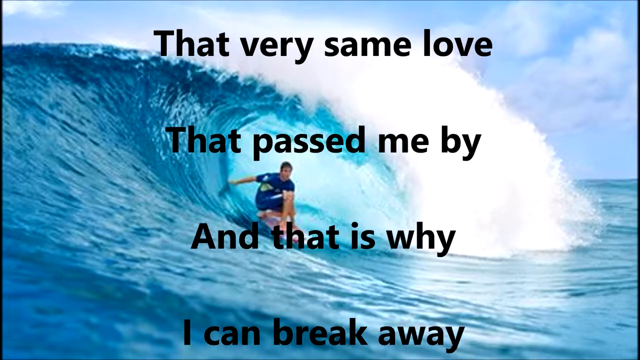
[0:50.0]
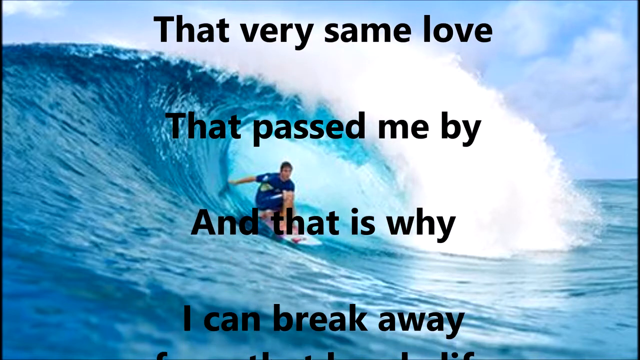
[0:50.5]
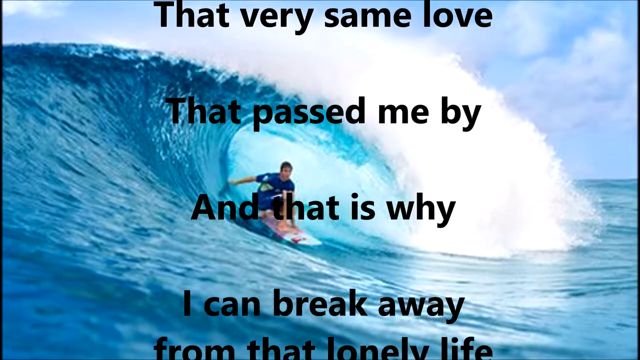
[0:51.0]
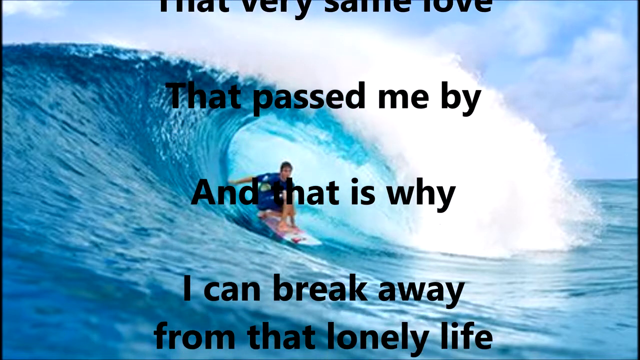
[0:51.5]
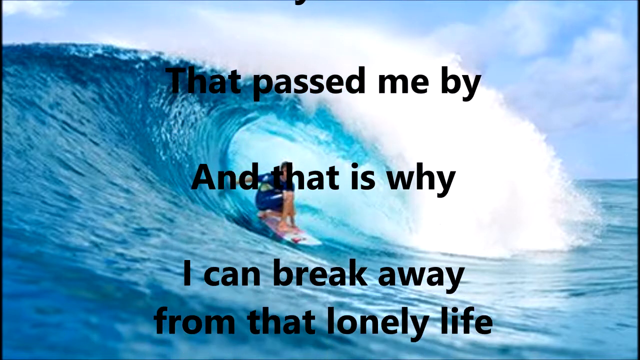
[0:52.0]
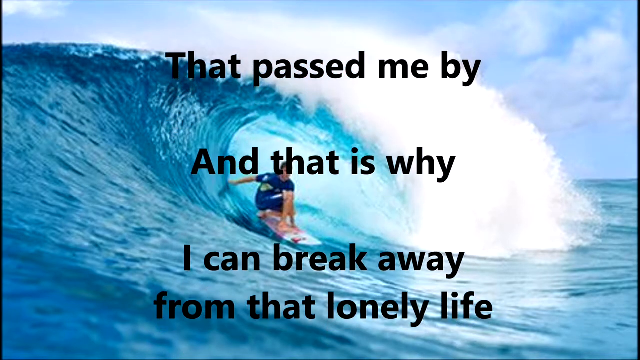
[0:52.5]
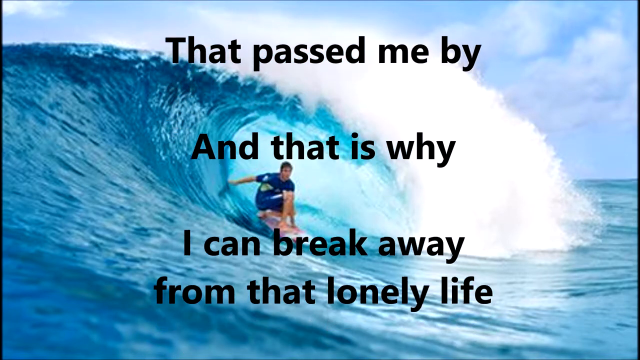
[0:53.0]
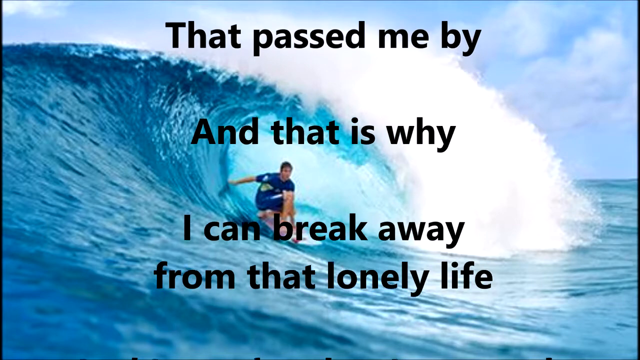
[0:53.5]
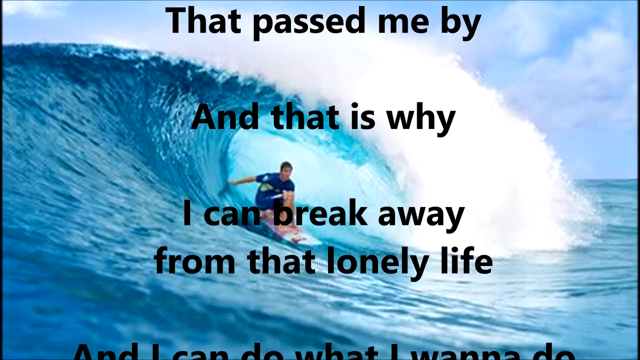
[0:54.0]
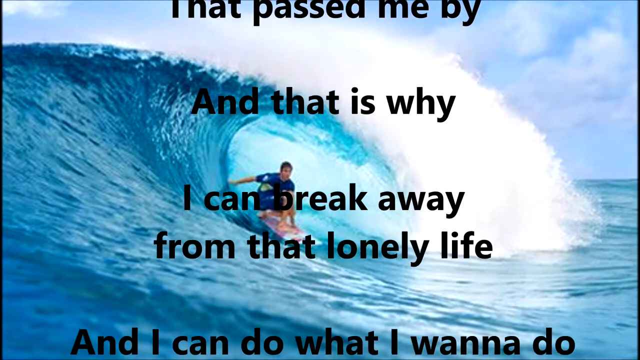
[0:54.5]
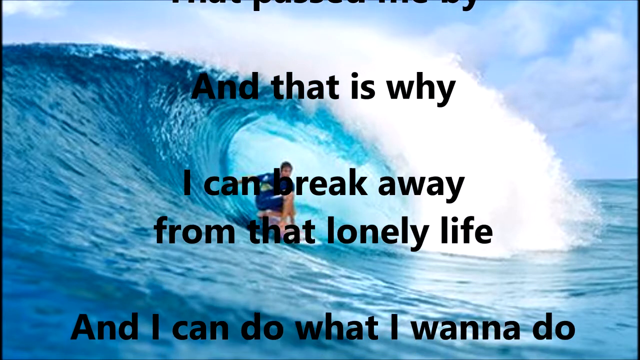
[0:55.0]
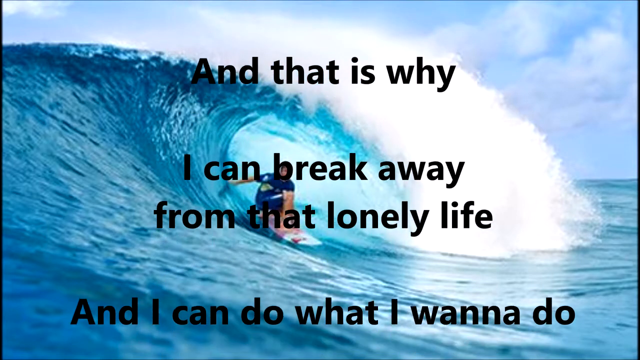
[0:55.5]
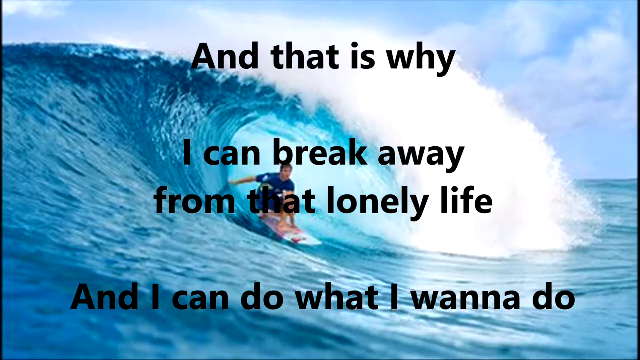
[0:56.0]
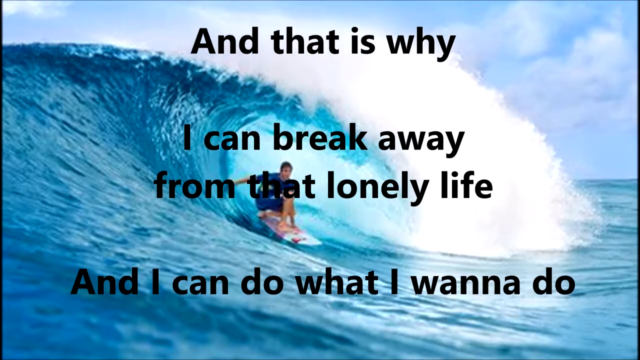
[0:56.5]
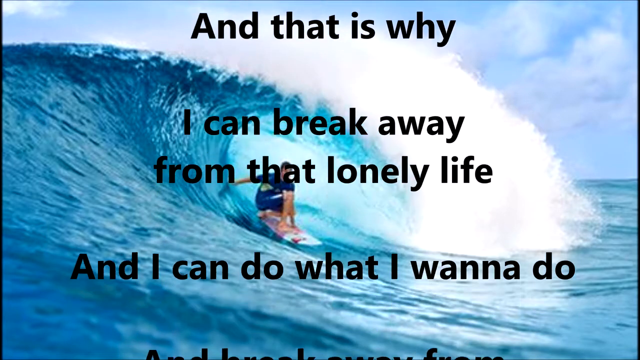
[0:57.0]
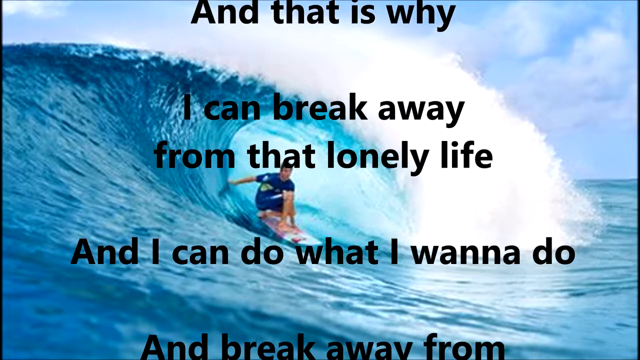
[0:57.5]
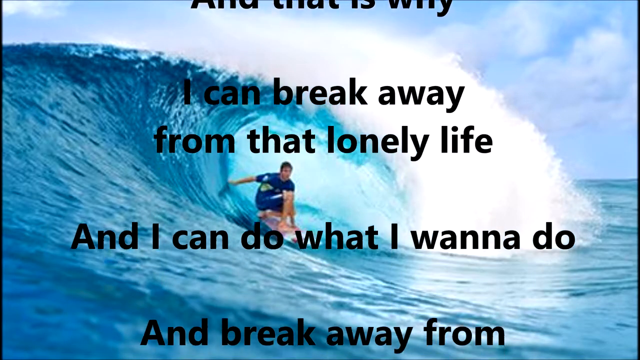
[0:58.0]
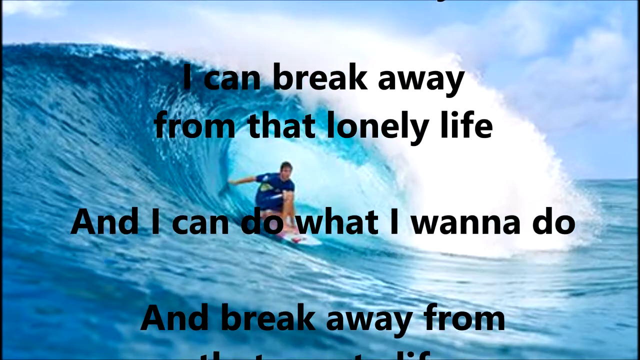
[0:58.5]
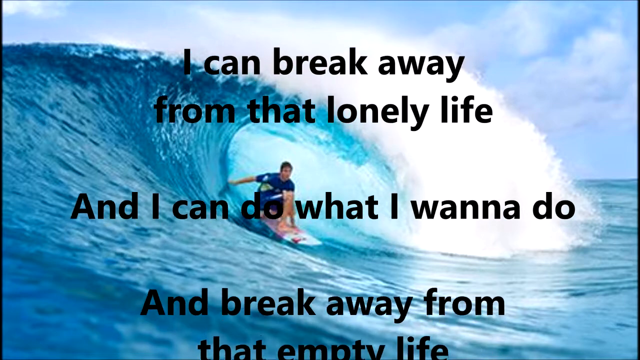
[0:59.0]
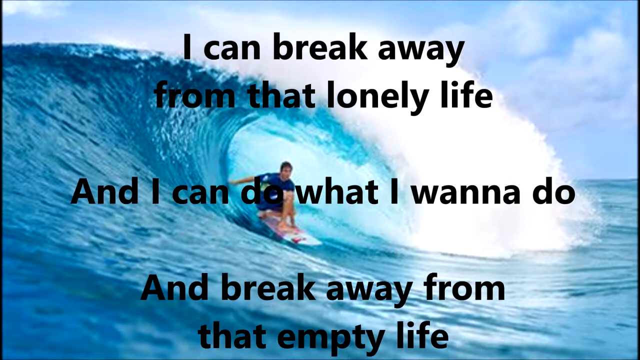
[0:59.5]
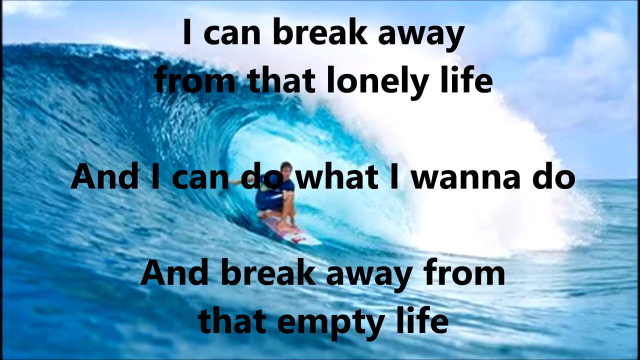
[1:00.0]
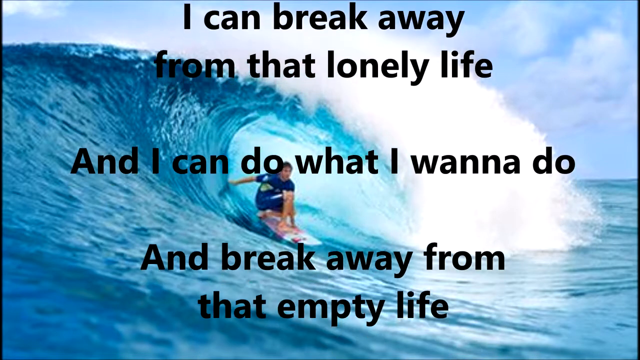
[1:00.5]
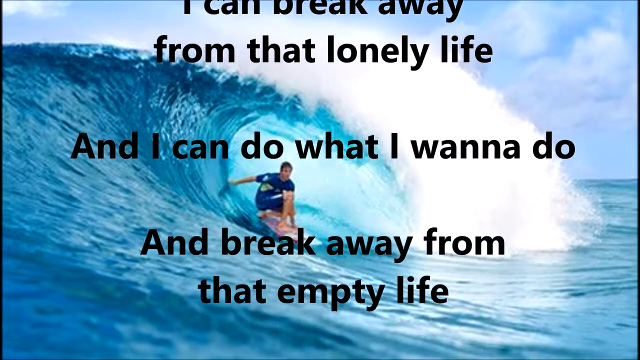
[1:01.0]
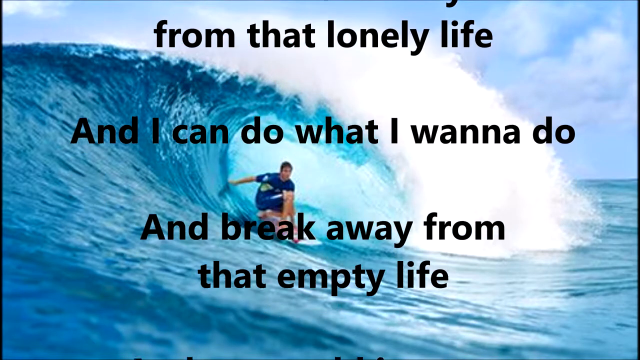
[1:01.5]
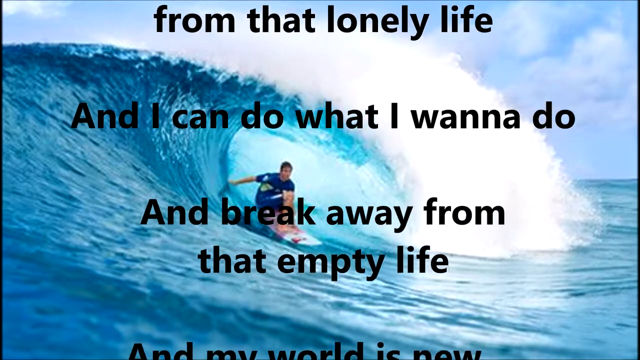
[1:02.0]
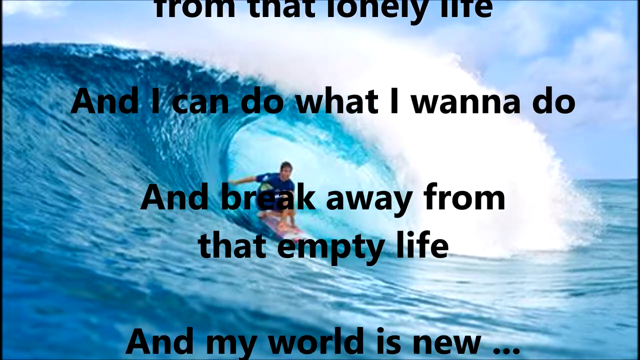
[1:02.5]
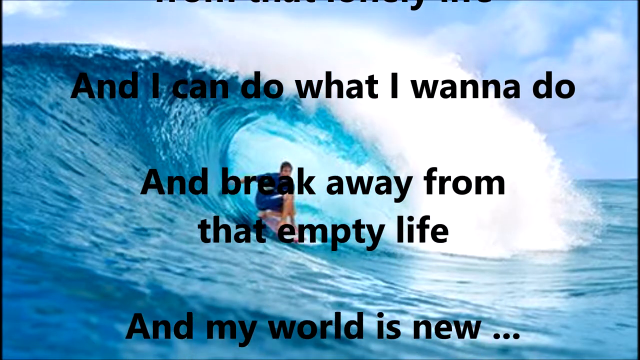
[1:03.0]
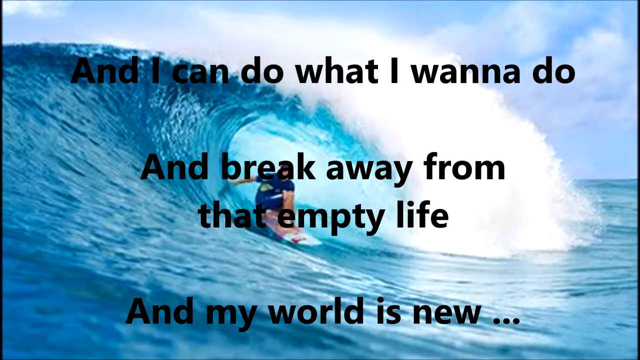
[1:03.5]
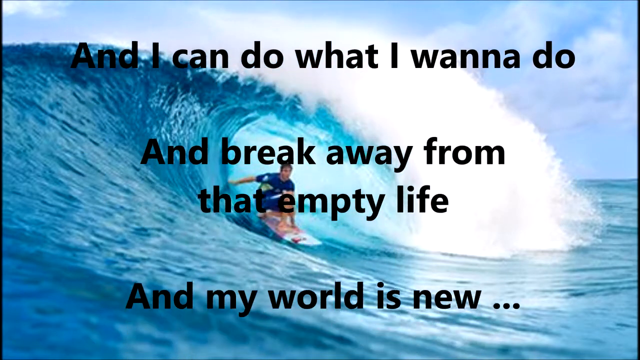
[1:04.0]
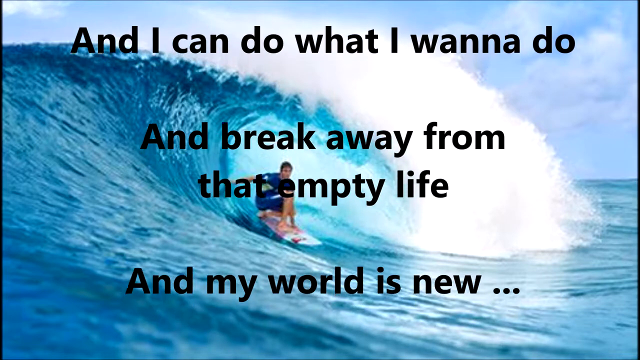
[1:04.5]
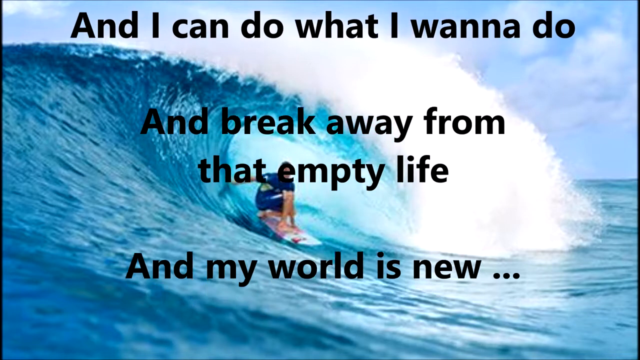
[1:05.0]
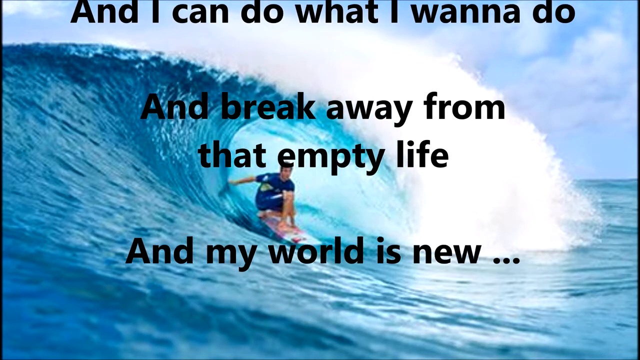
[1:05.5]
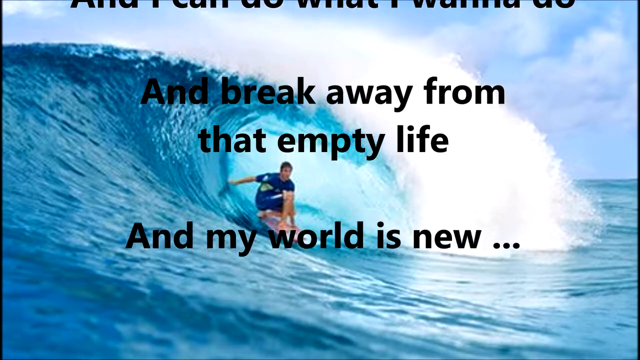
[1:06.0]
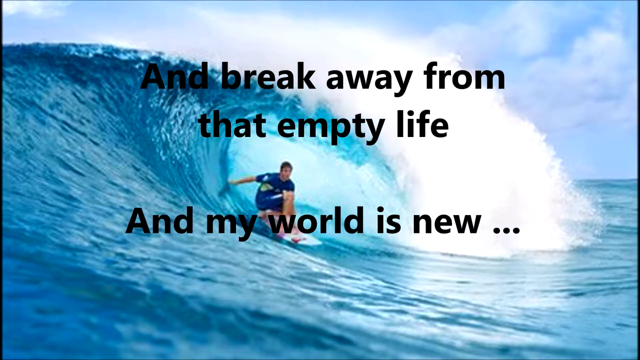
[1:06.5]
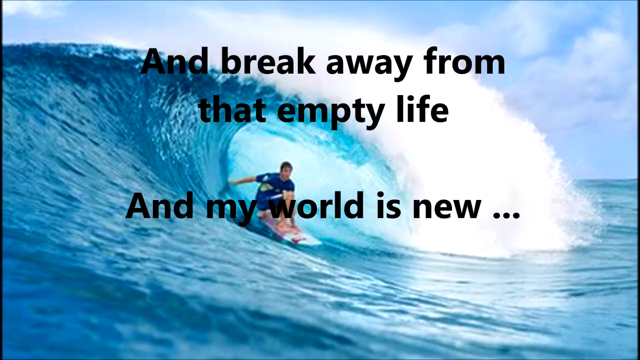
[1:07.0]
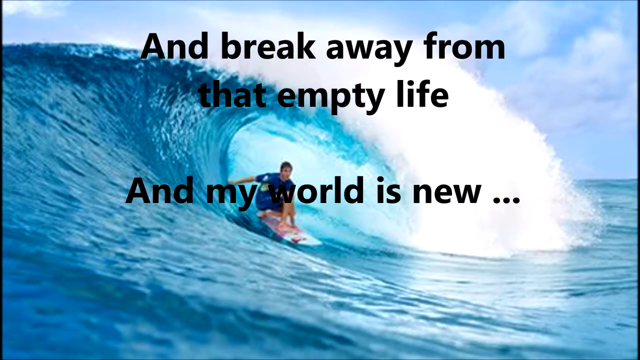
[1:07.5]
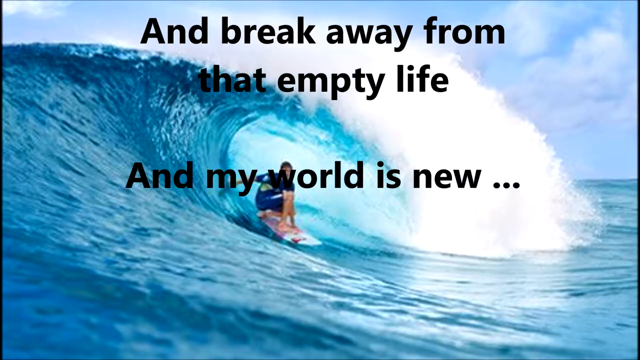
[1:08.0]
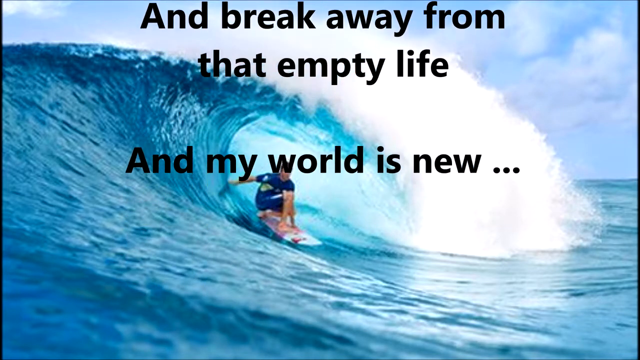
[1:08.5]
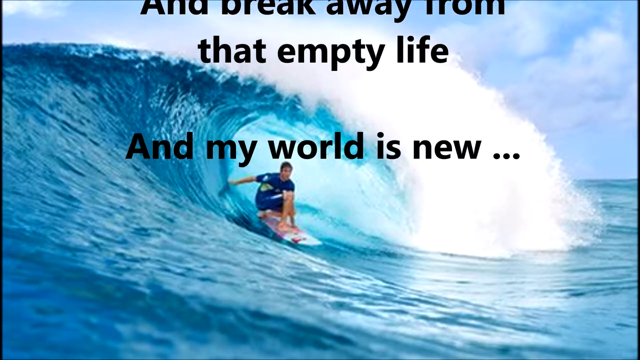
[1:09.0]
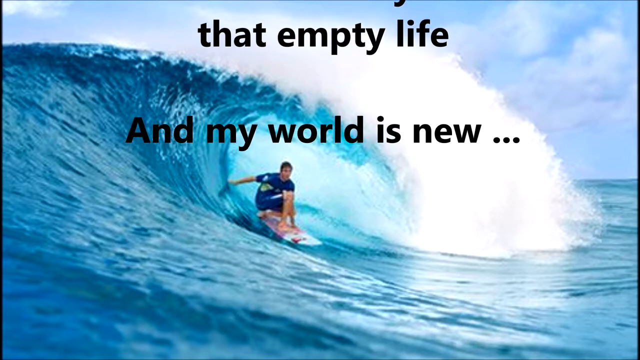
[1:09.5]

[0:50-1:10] The next line reads "I can break away from that lonely life and I can do what I want to do and break away from that empty life and my world is new..." Then there is a kind of long space at the bottom. The text moves at a fairly fast pace; each line is short, and the lines go by in a steady scroll from bottom to top. Above the wave over the surfer's head is a big crest of foamy white water, which also makes the text easier to read.